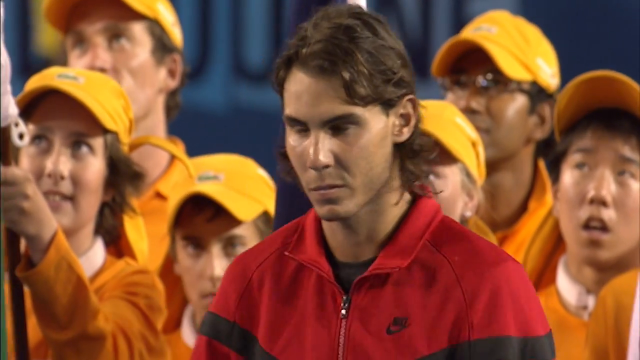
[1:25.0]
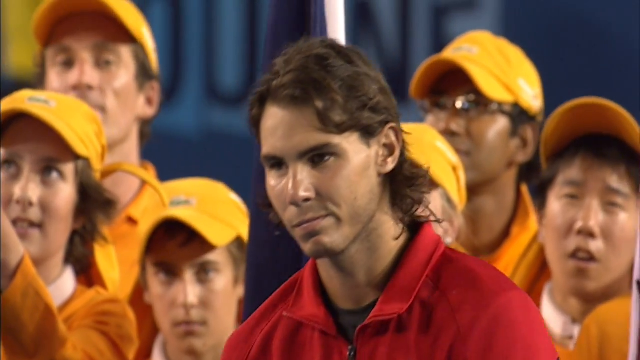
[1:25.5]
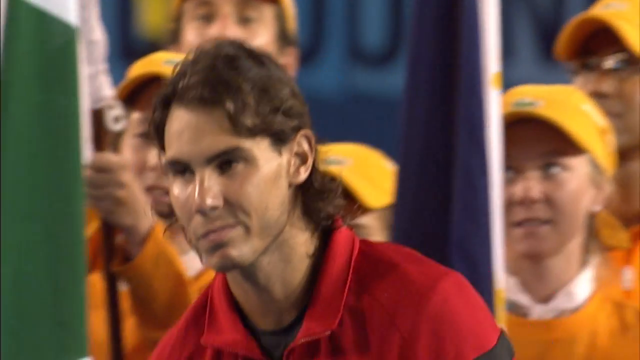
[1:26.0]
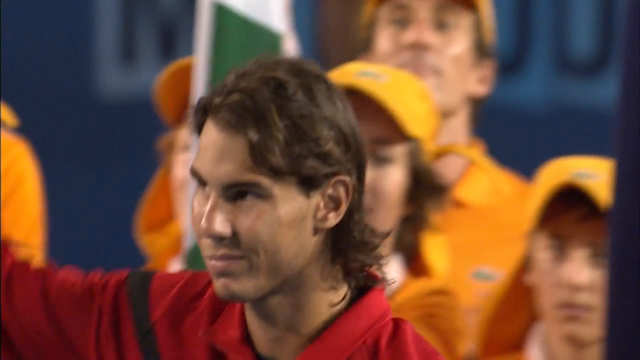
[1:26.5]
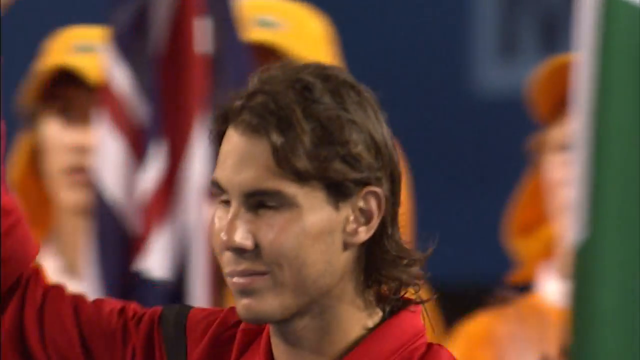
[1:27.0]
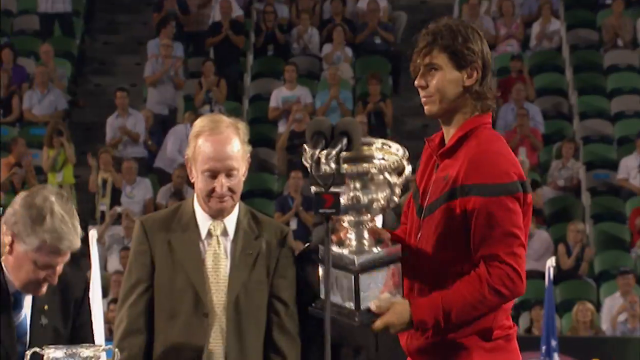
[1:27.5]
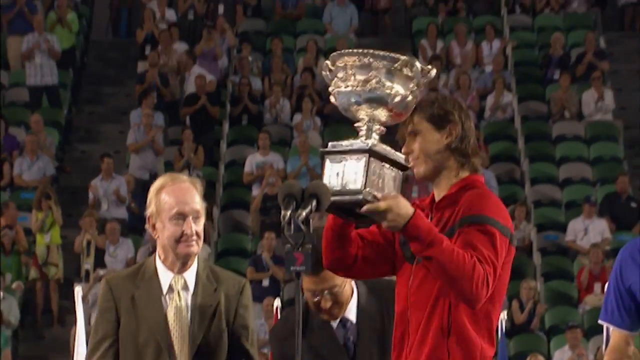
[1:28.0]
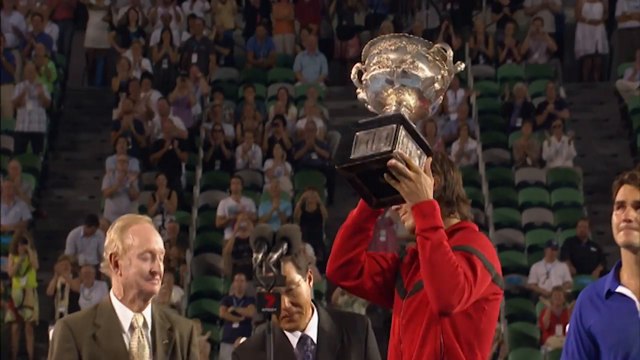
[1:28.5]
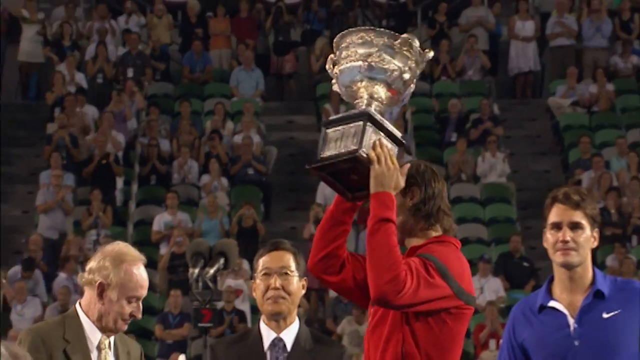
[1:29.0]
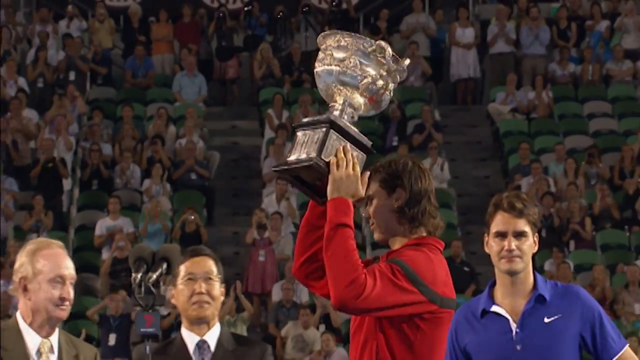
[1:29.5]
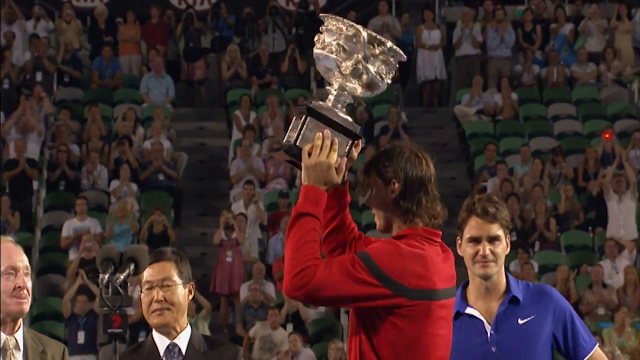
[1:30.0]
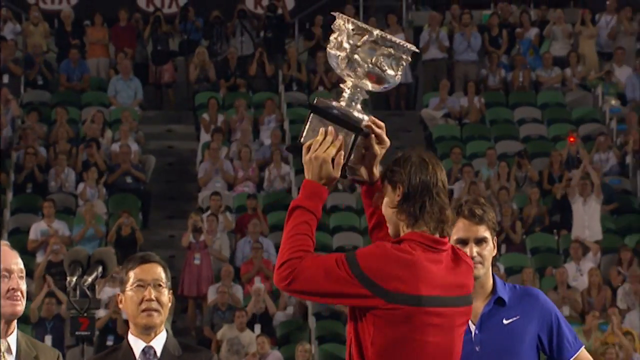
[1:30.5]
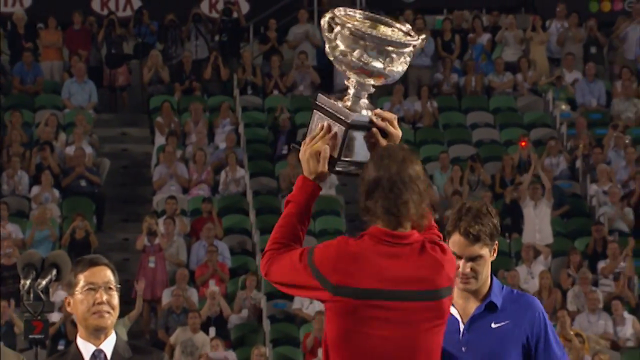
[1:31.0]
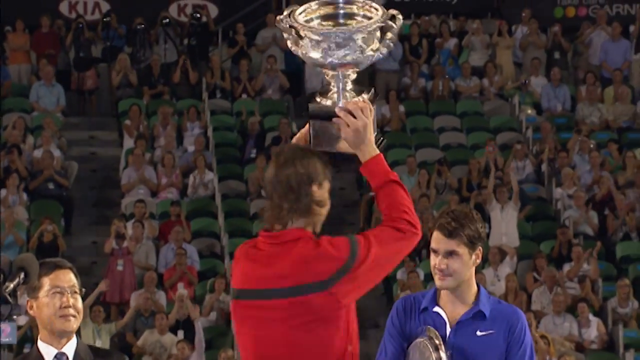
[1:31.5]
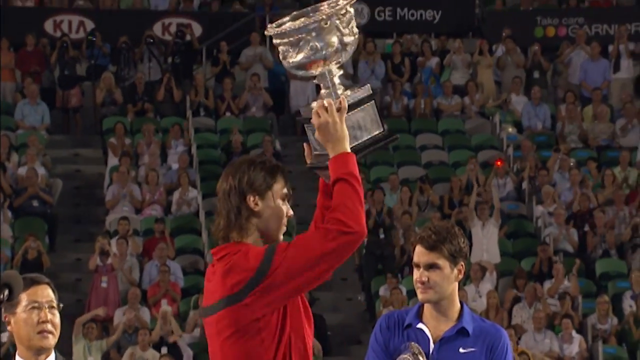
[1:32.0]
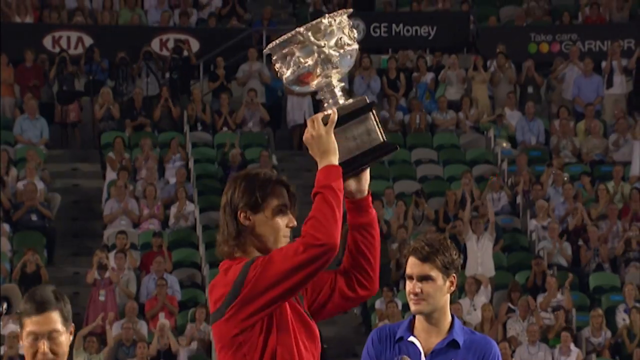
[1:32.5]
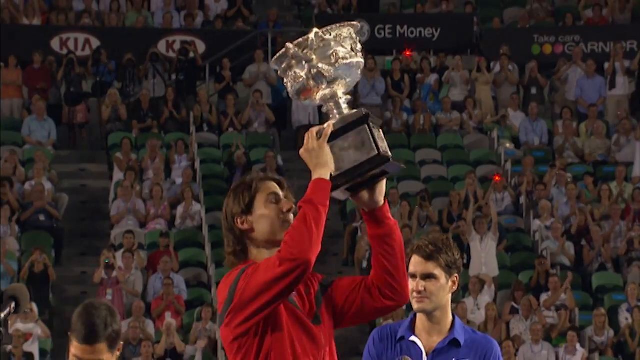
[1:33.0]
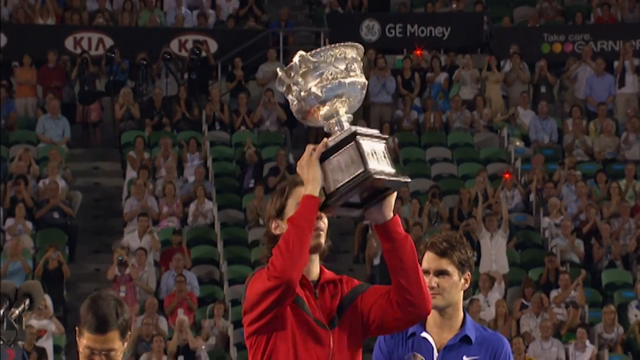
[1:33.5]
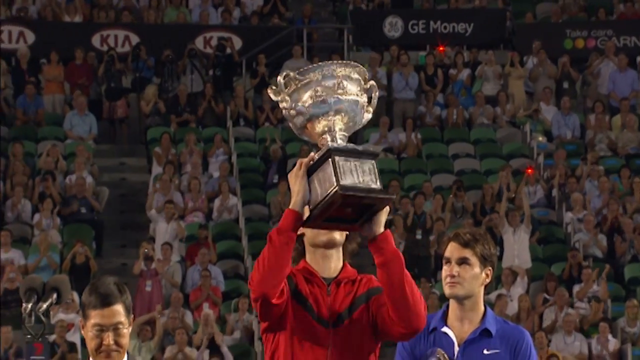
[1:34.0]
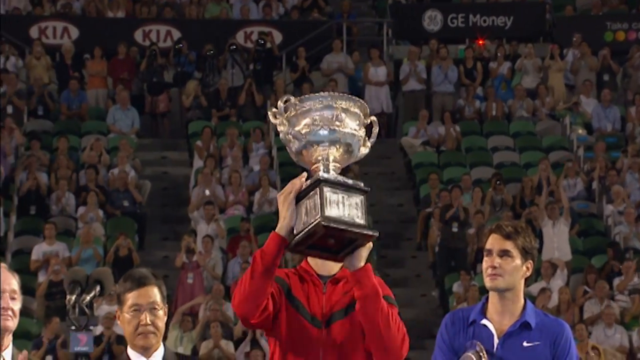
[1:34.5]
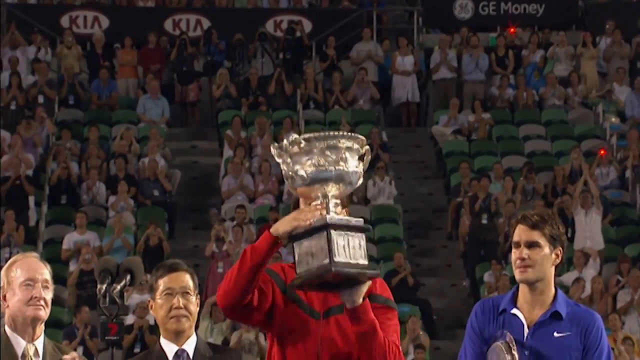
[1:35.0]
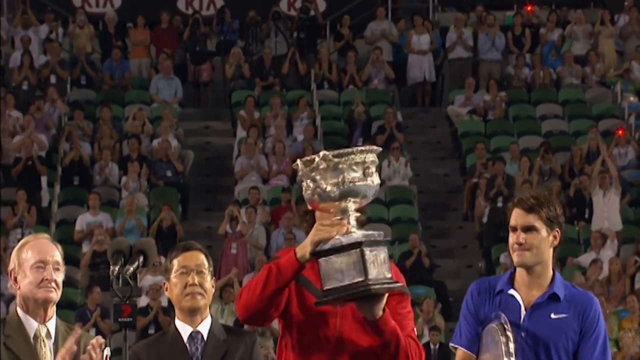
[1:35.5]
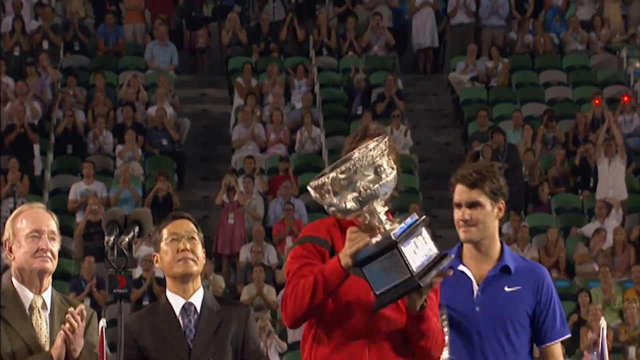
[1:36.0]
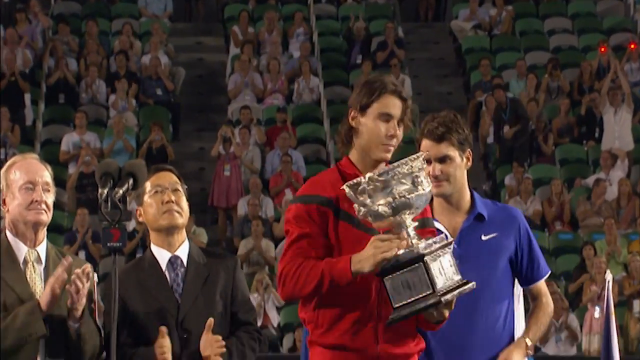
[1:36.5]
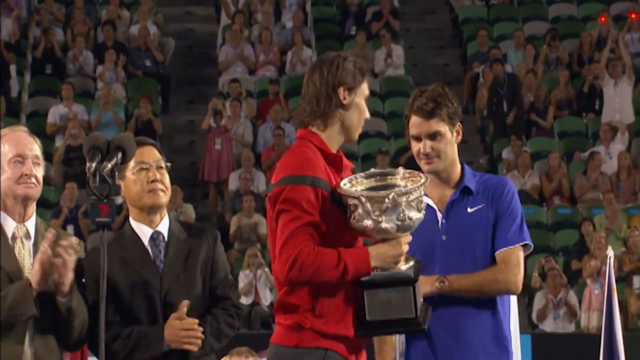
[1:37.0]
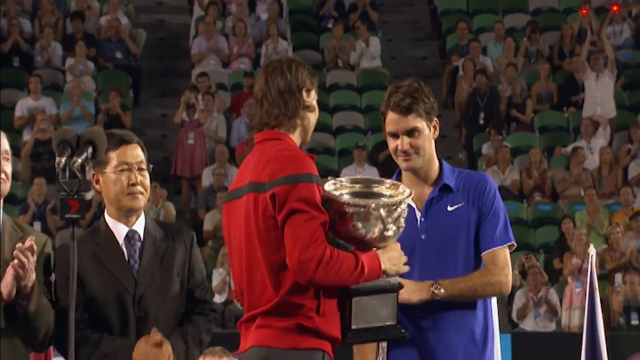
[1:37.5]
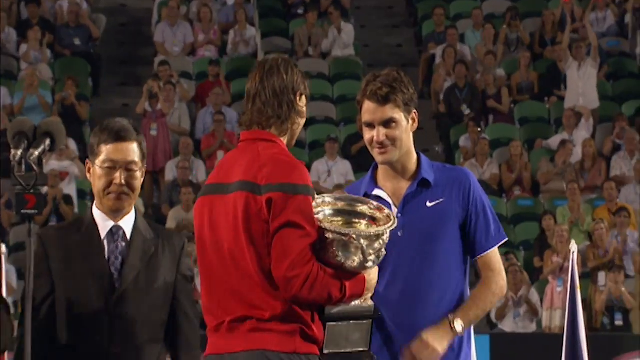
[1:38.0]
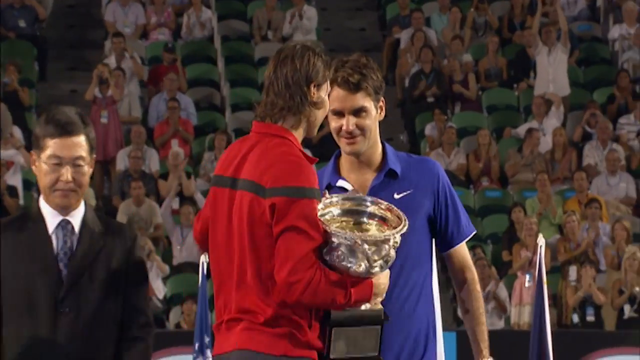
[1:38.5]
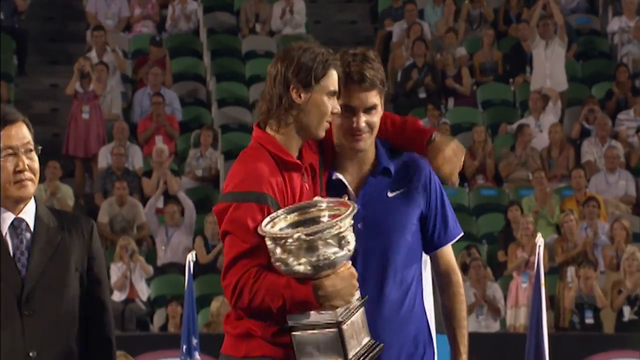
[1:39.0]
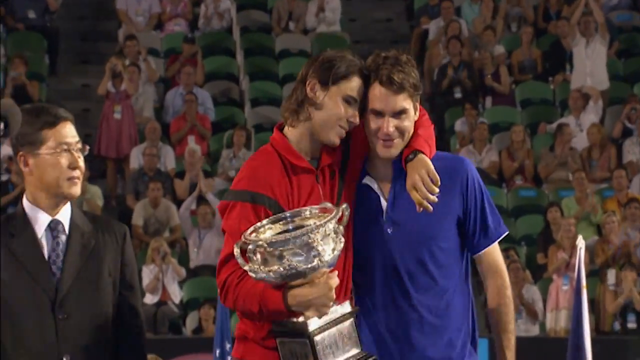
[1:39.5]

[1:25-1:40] The opponent holds a bigger trophy, a silver cup with a silver body and a black stand, and raises it high. He wears a red jacket with a black V-shape strap on the chest. Cameras keep flashing. He hugs Roger. On the left side, the managers clap, and the fans clap, some of them standing.